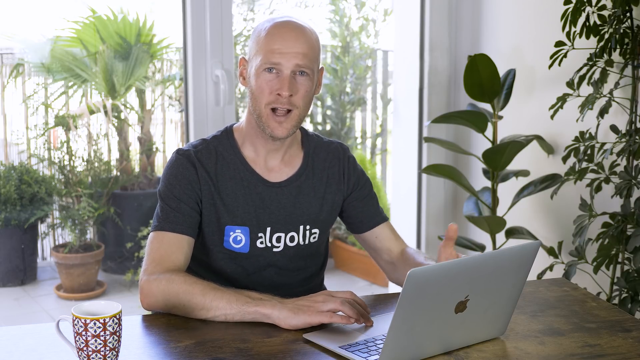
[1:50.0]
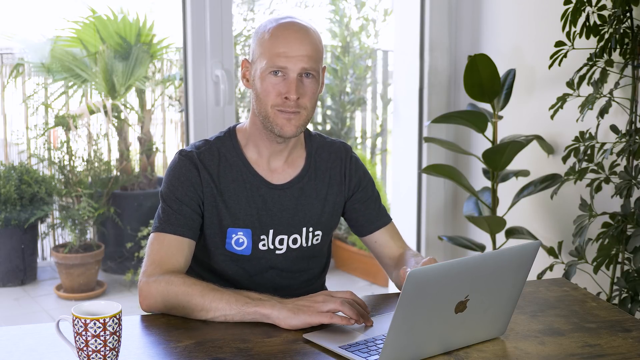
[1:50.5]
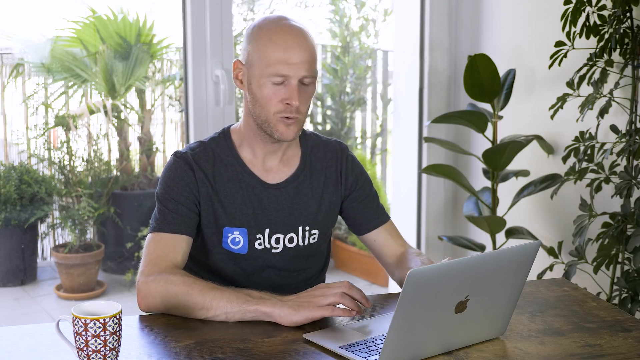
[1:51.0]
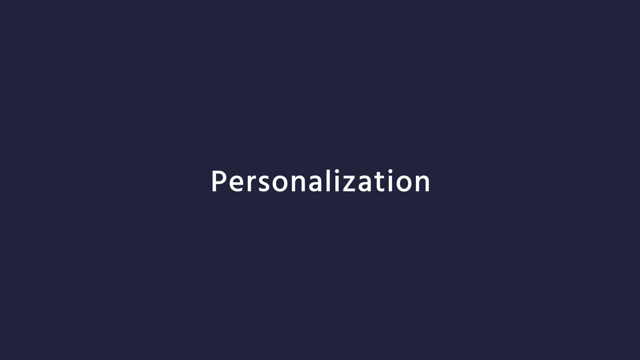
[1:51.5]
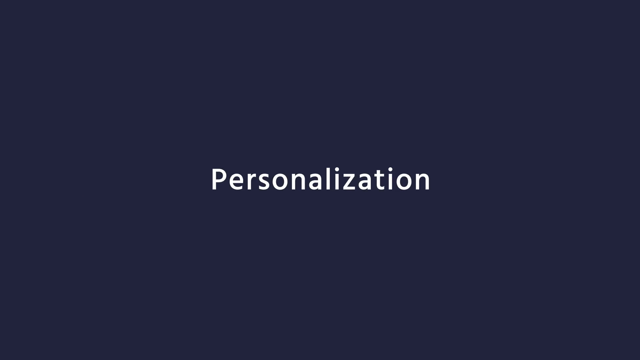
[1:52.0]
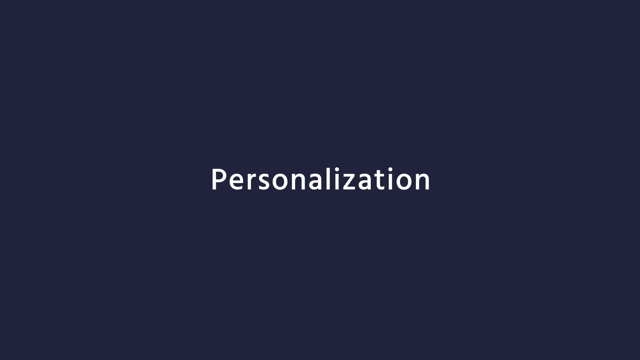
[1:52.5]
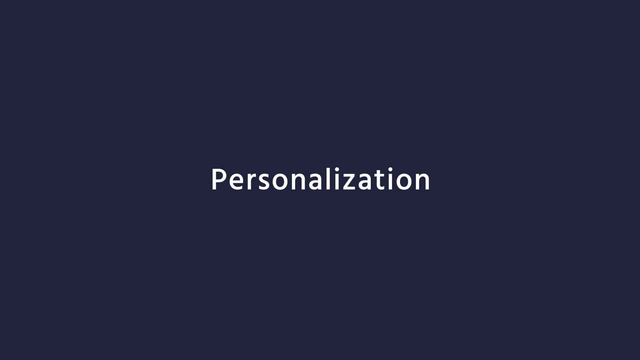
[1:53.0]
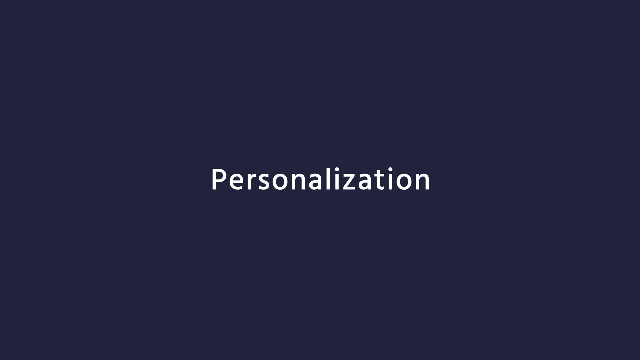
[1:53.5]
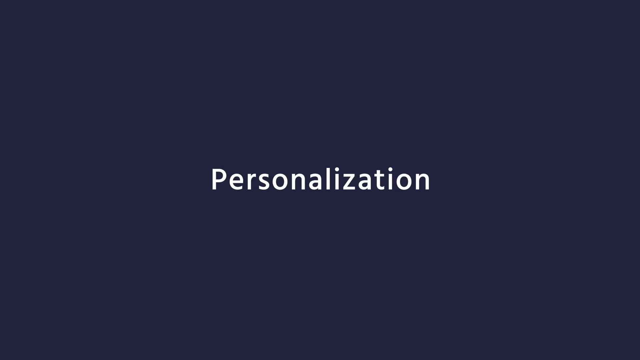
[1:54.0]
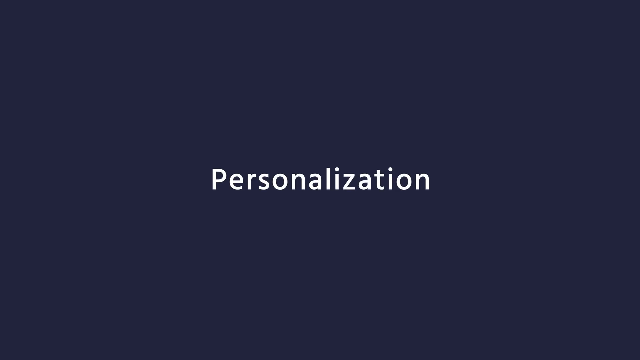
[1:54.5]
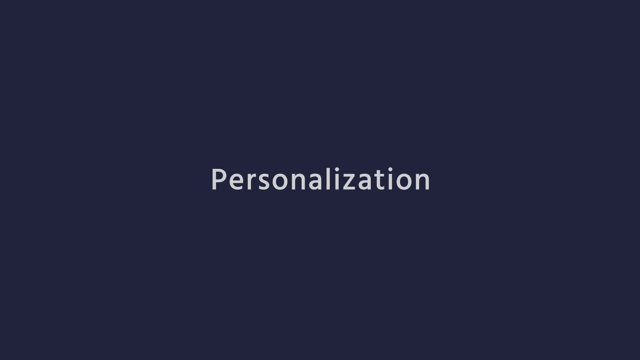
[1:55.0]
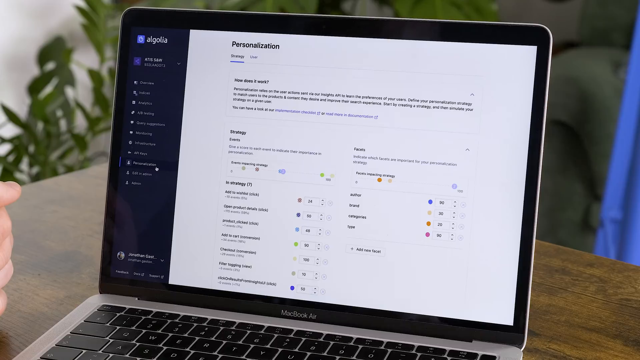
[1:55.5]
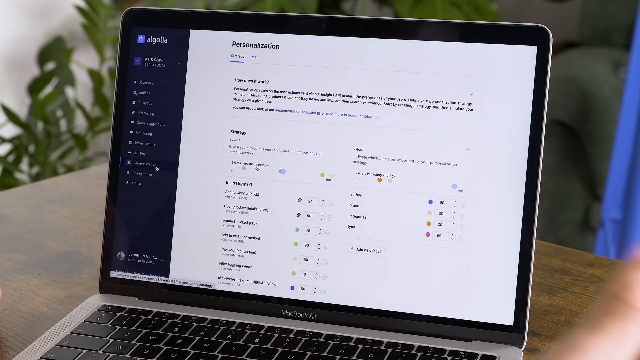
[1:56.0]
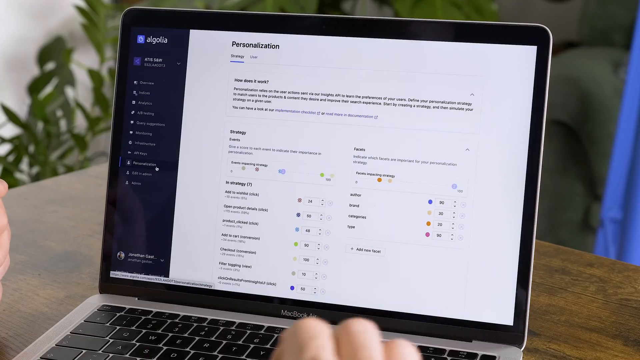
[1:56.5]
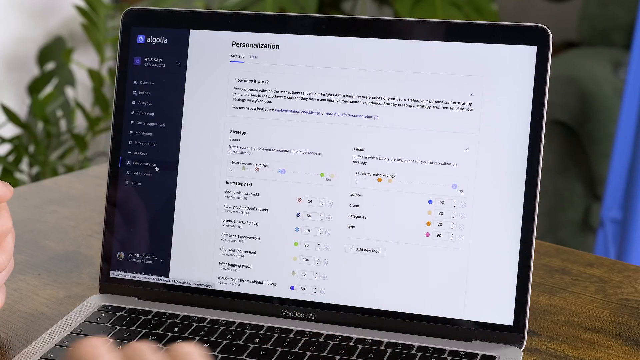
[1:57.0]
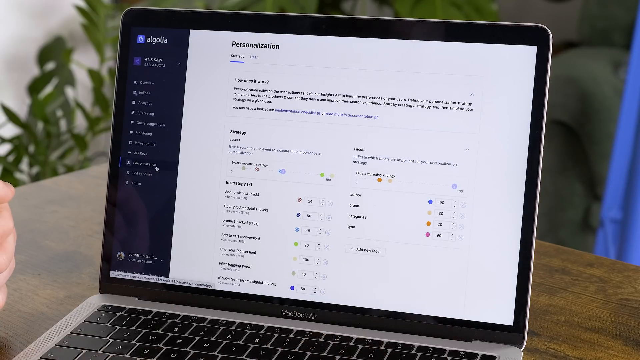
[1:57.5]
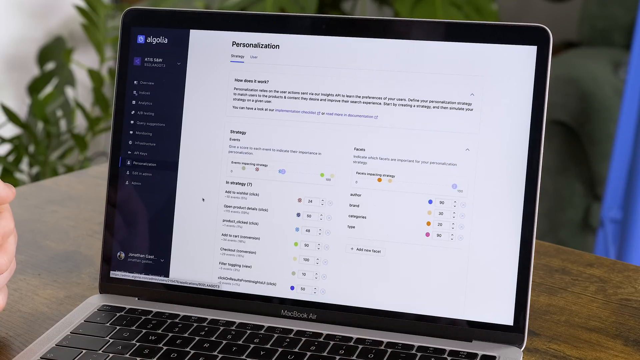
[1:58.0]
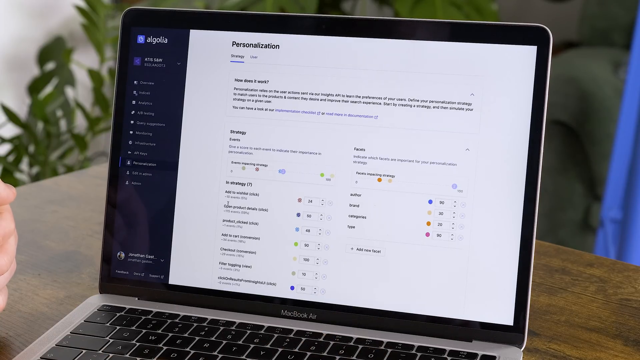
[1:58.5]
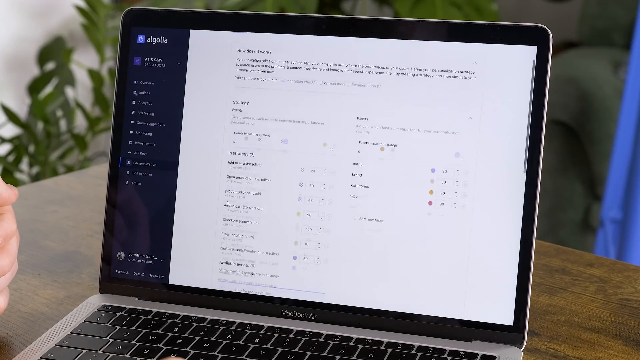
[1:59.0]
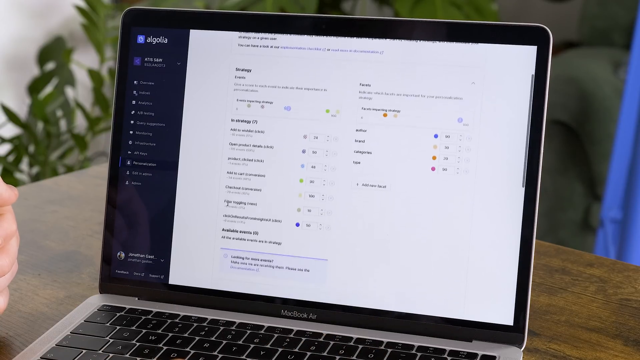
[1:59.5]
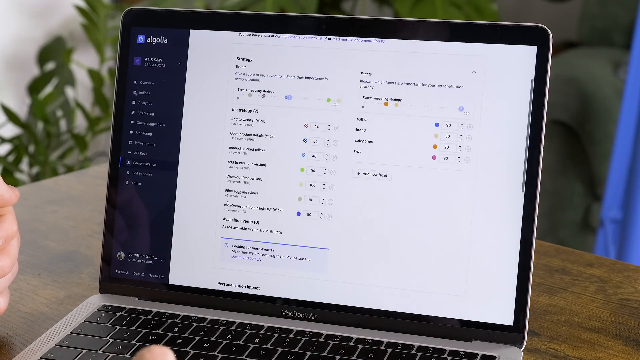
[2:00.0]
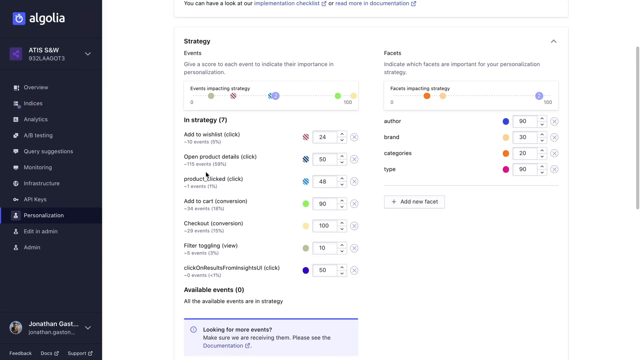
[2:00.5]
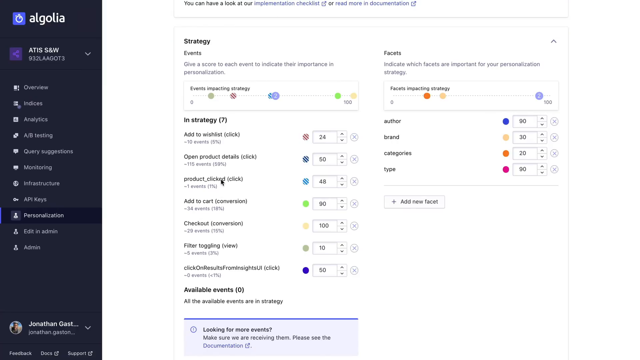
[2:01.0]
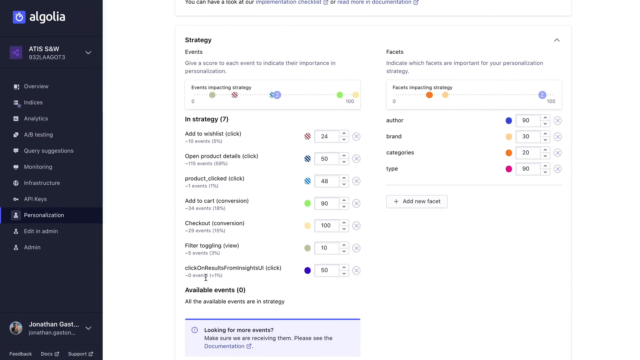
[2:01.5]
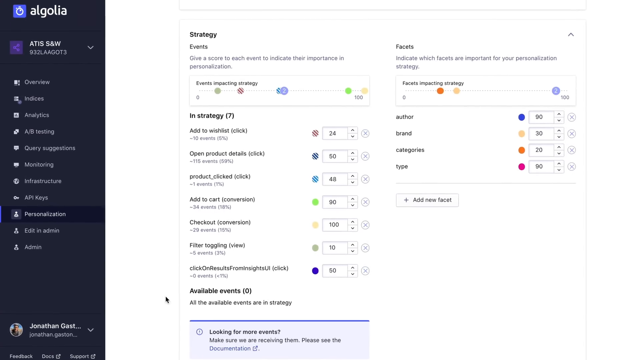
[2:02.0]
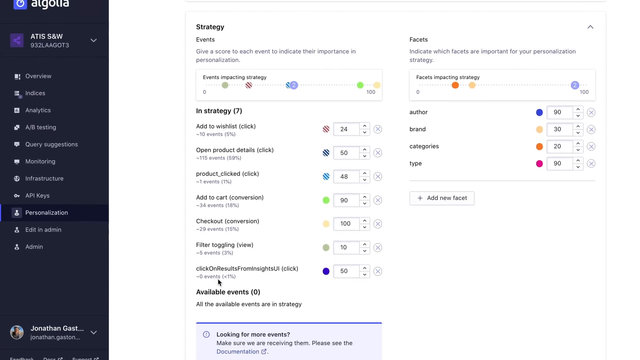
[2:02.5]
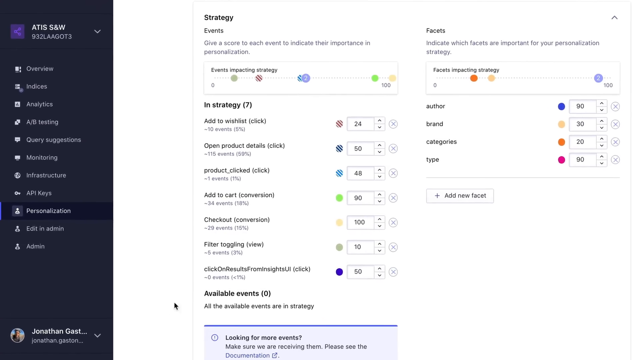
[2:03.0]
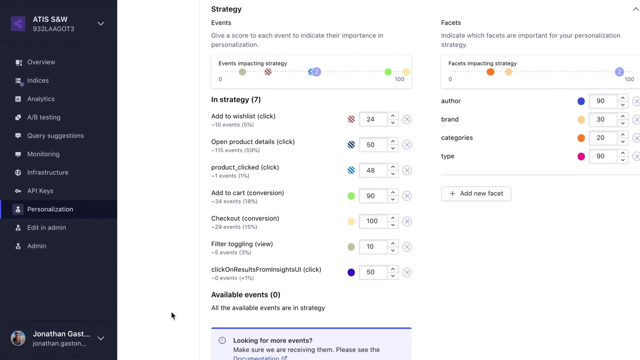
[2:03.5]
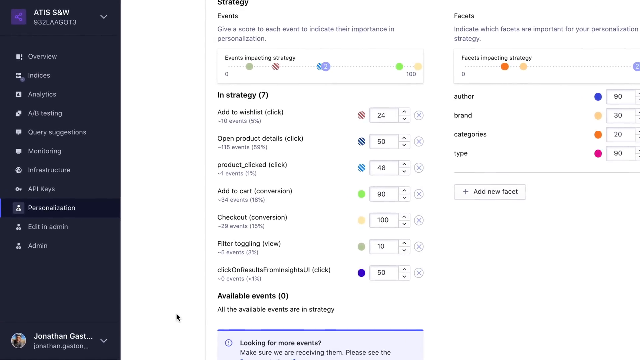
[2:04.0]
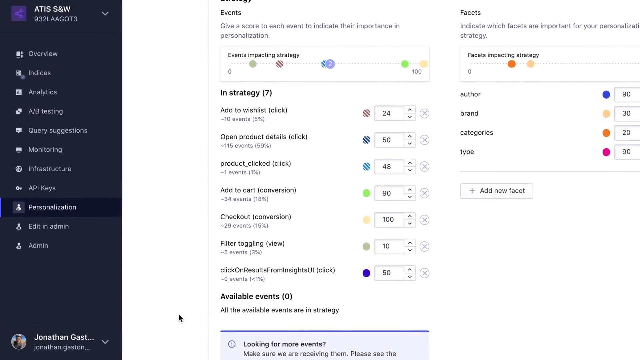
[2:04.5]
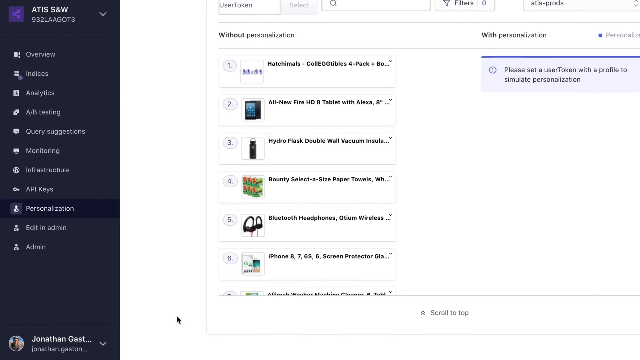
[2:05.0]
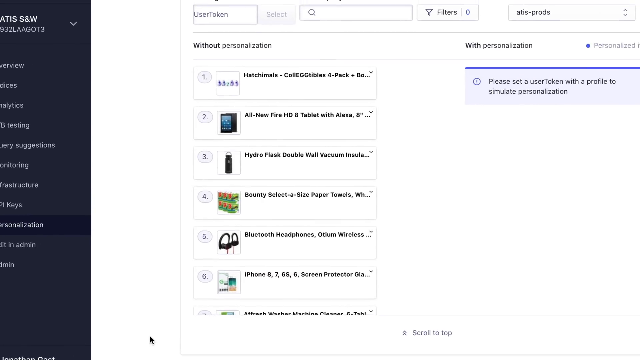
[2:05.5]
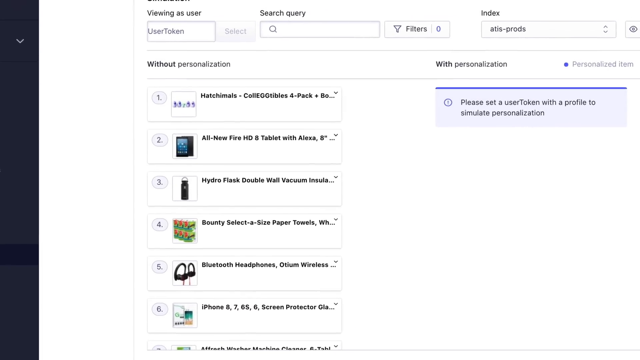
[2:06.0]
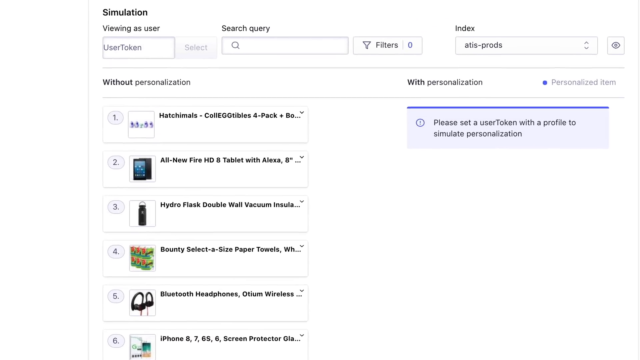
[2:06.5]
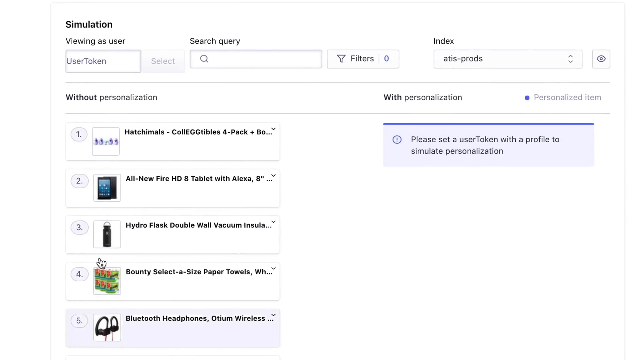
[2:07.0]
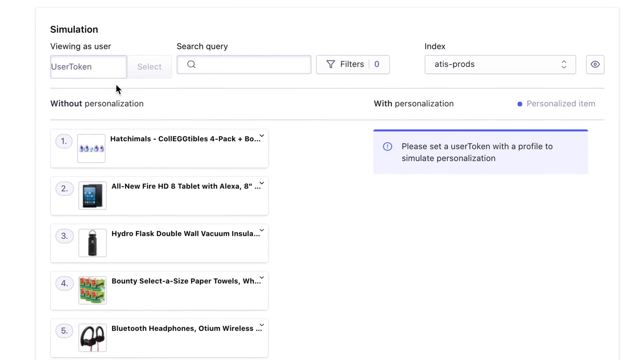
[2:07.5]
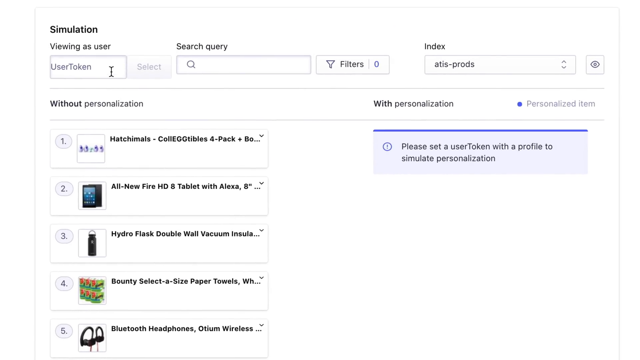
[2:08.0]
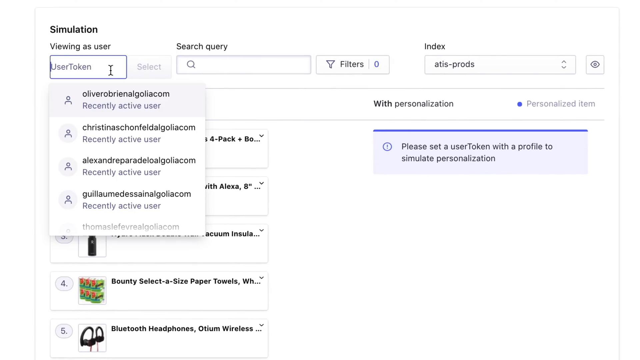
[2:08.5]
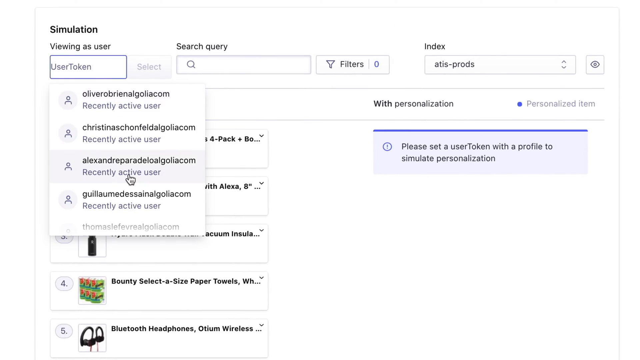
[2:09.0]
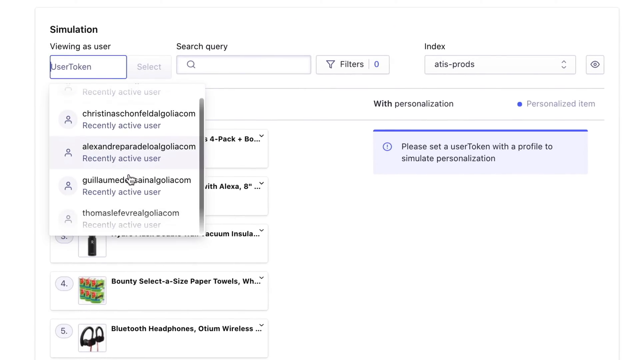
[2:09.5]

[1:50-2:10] The man teaching about the program or app Algolia, whose logo has a stopwatch next to the word, is bald and white, with a slight scruffy beard growing in, wears a black t-shirt and has a Mac computer. He shows the personalization section of the program, going to his screen and scrolling down. His name apparently appears on the computer as Jonathan Gast. At "Simulation" he starts to click on something but does not. In personalization, under a strategy tab, there are items such as add to wish list, open product details, products clicked, add to cart, checkout, filter toggling and click on results, and on the right side there are facets such as author, brand, categories or type.